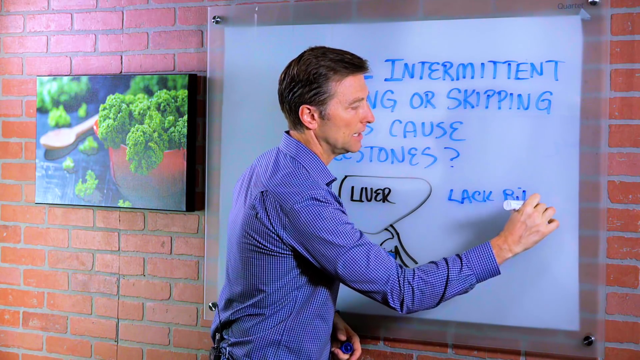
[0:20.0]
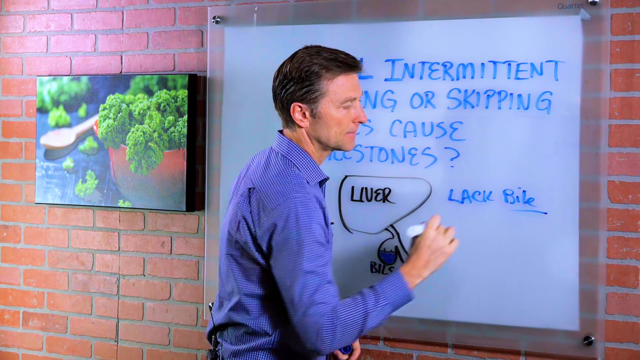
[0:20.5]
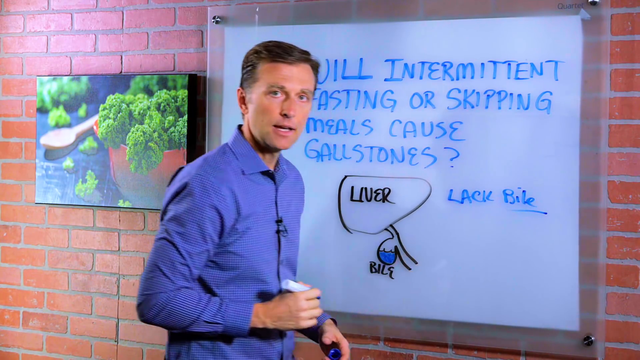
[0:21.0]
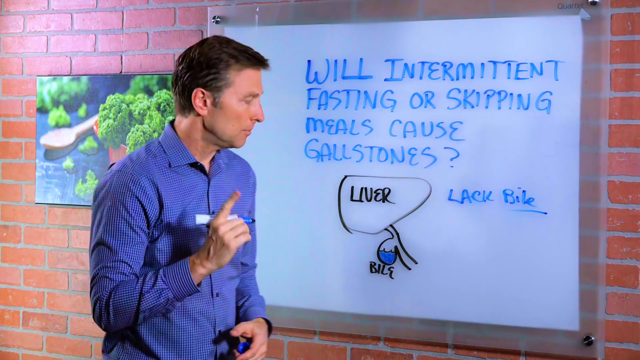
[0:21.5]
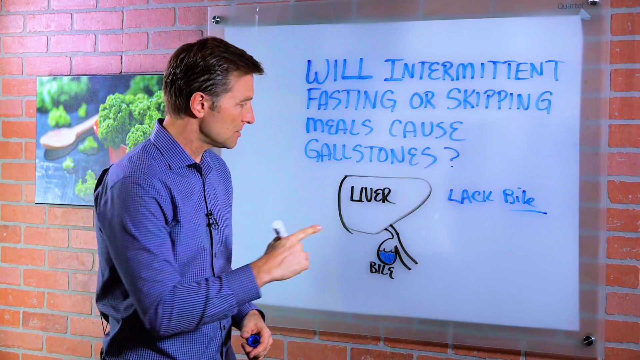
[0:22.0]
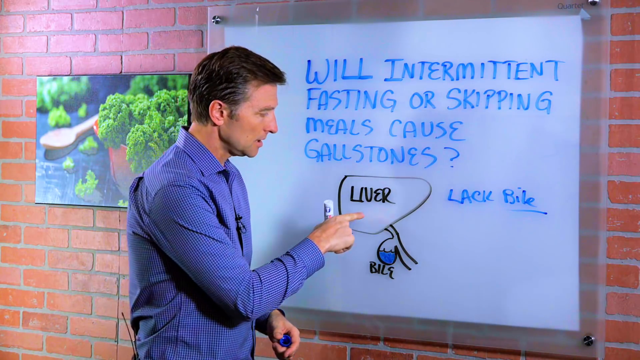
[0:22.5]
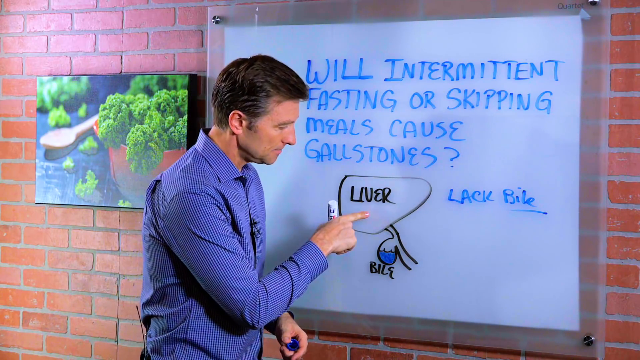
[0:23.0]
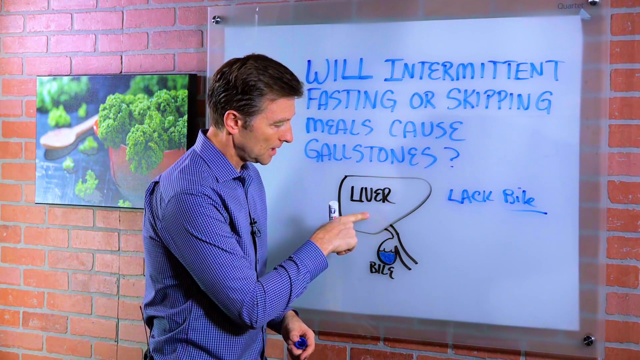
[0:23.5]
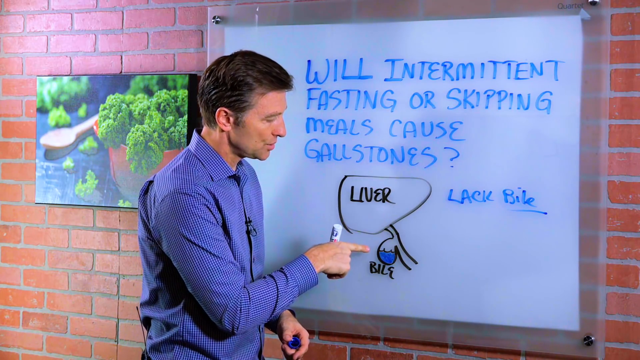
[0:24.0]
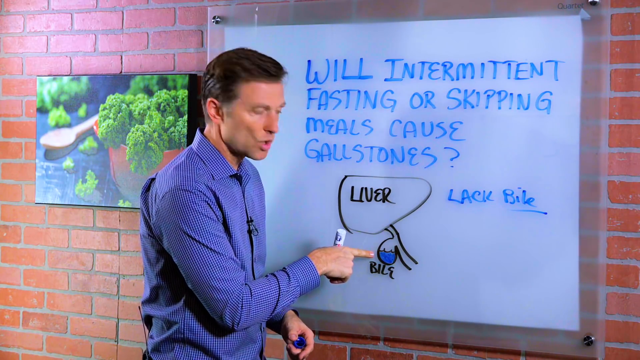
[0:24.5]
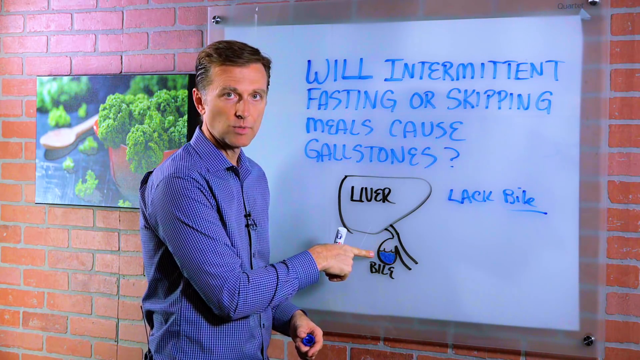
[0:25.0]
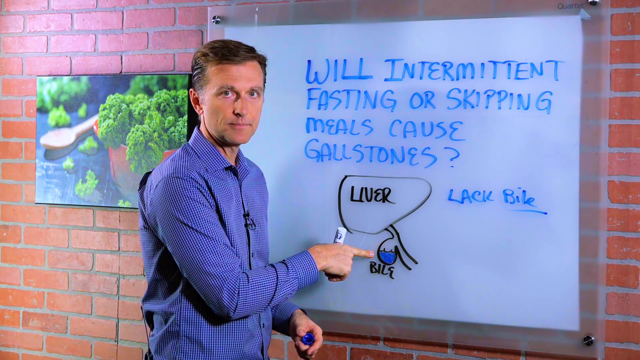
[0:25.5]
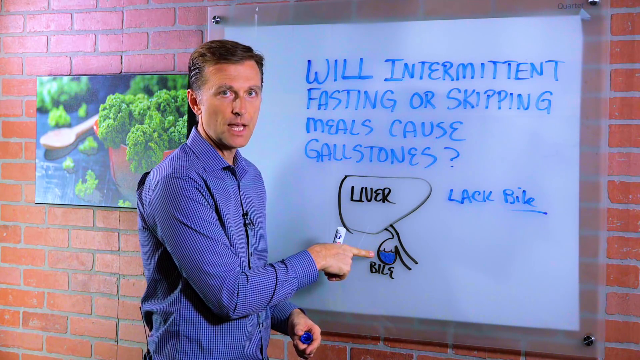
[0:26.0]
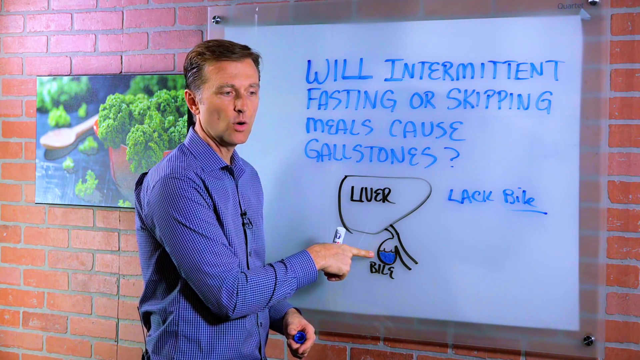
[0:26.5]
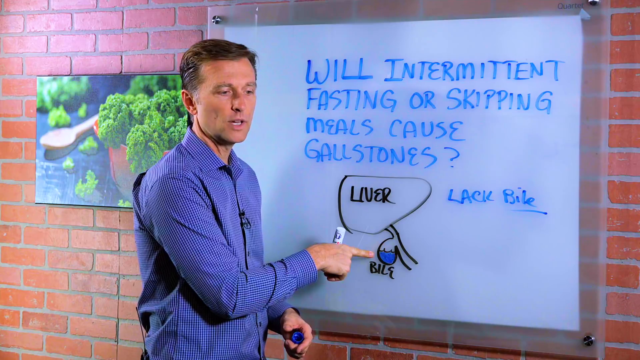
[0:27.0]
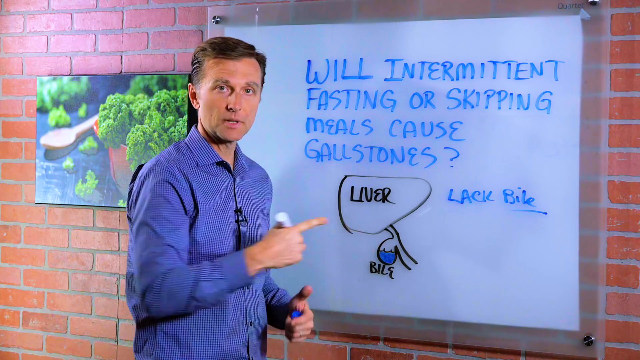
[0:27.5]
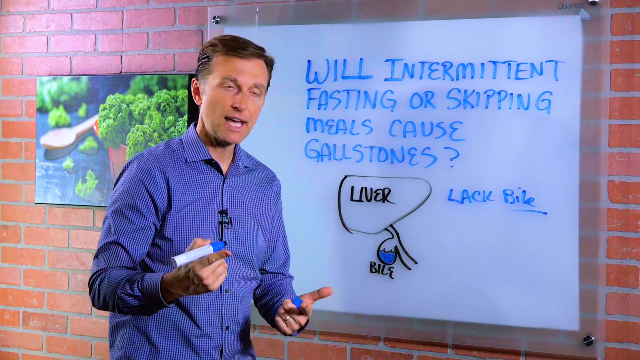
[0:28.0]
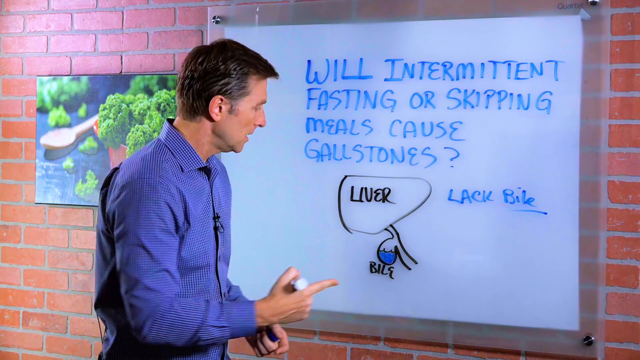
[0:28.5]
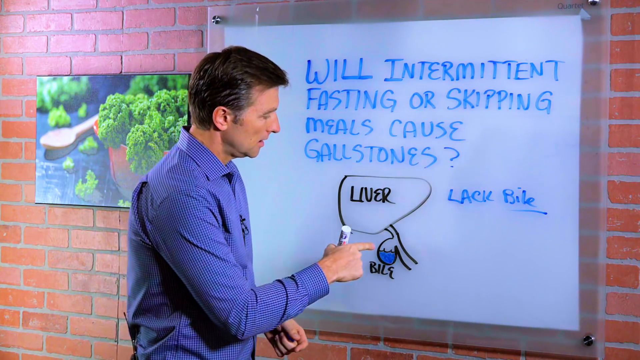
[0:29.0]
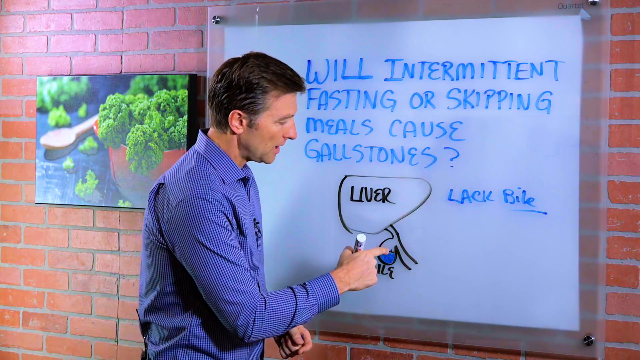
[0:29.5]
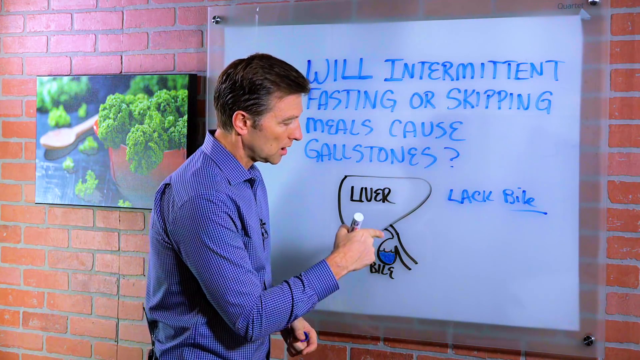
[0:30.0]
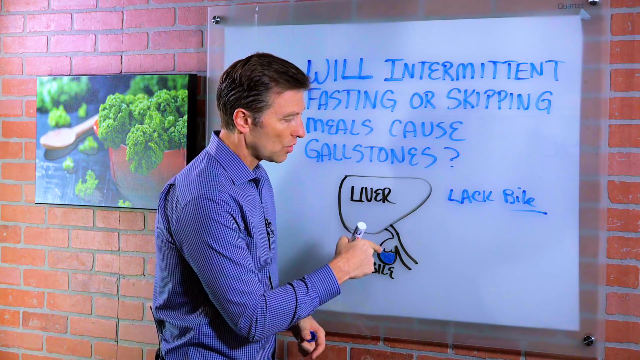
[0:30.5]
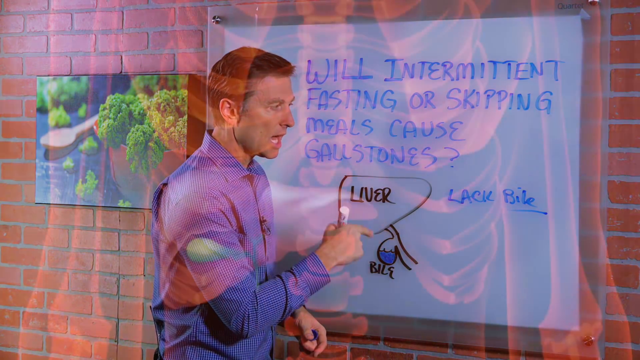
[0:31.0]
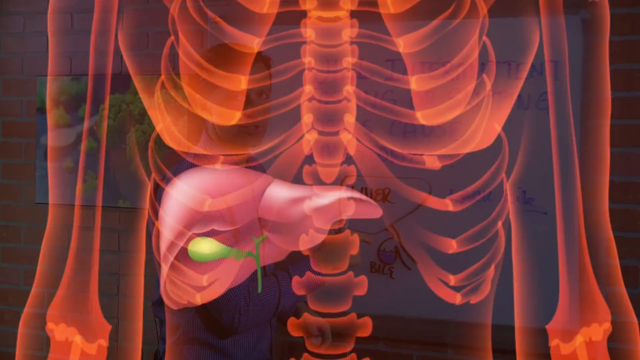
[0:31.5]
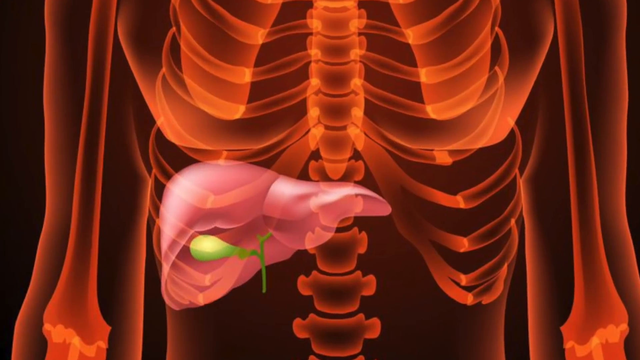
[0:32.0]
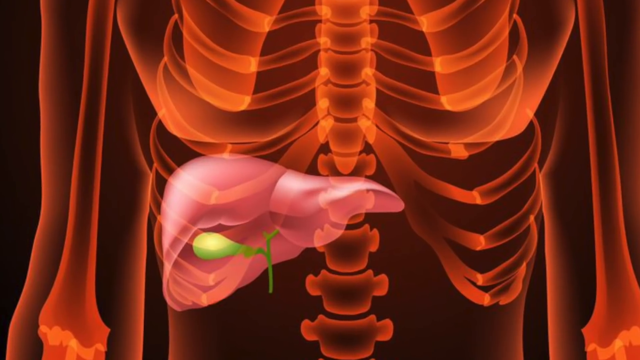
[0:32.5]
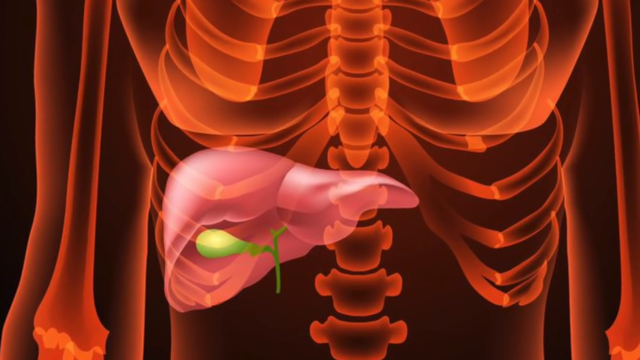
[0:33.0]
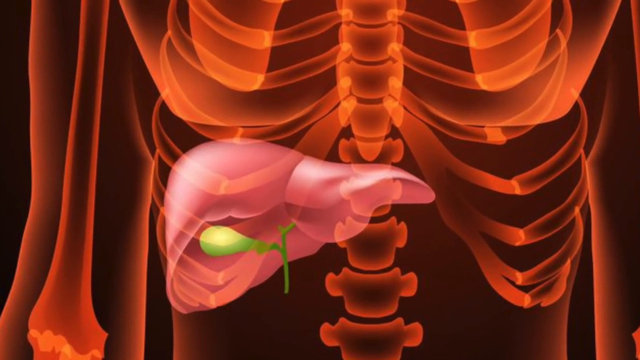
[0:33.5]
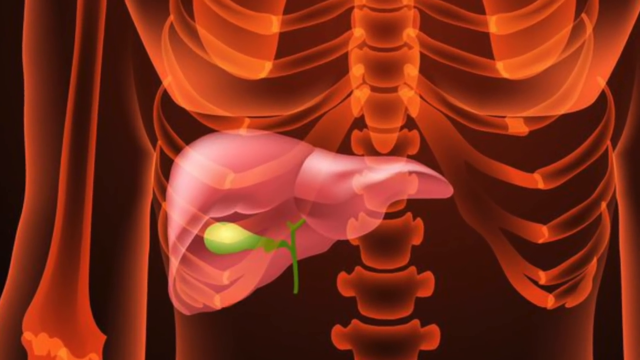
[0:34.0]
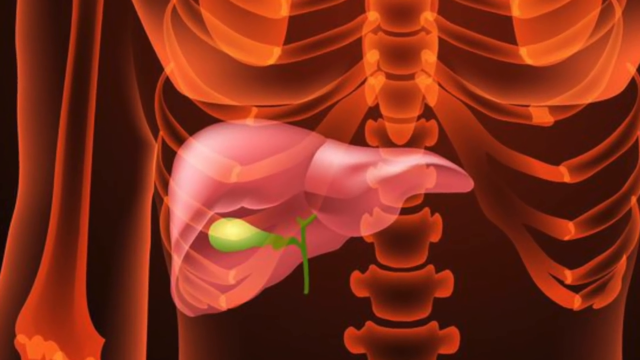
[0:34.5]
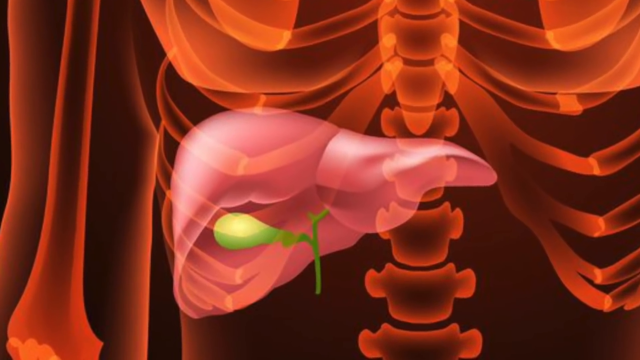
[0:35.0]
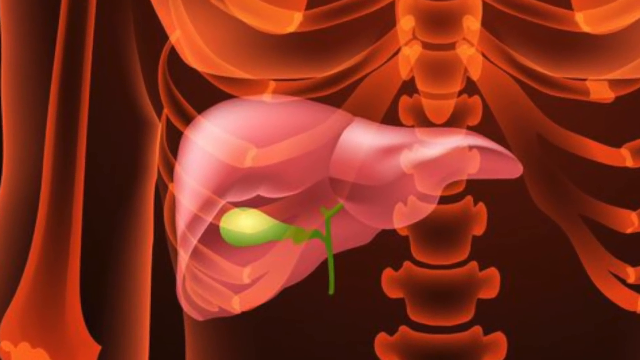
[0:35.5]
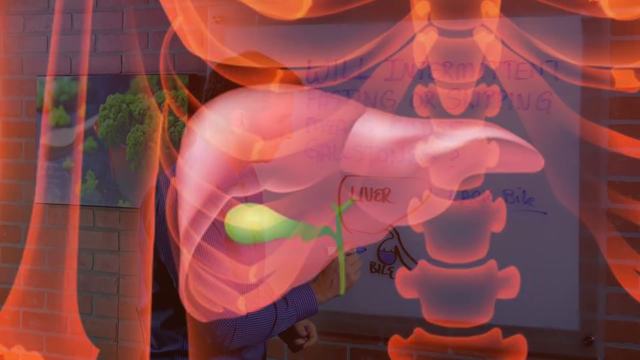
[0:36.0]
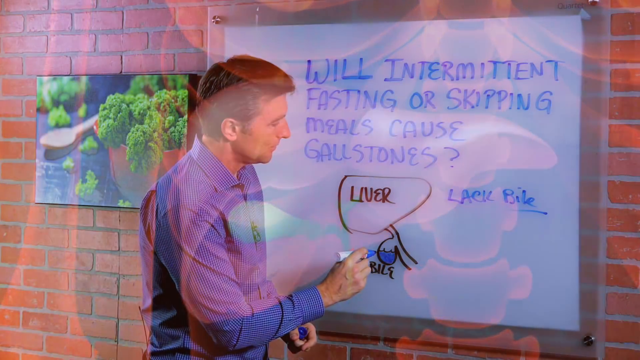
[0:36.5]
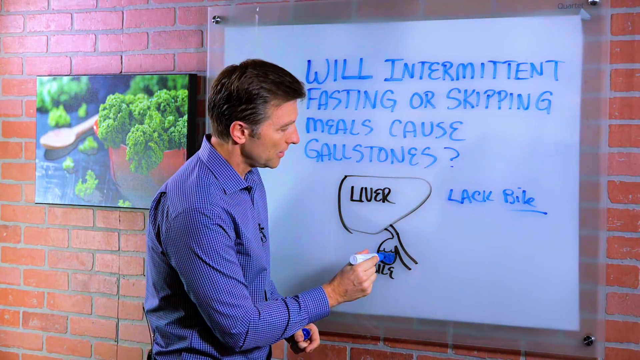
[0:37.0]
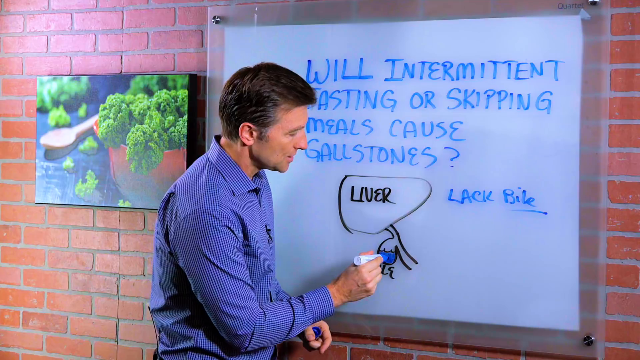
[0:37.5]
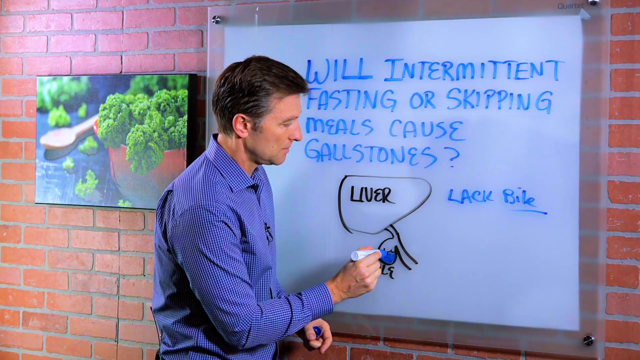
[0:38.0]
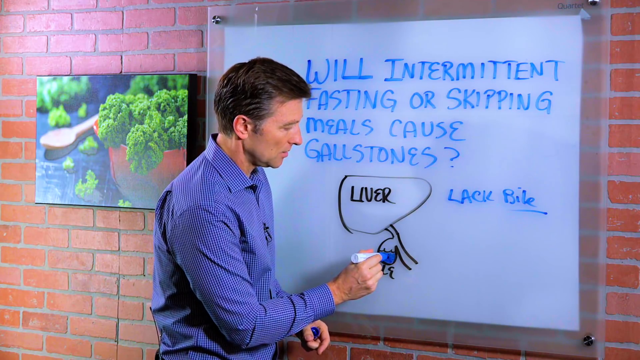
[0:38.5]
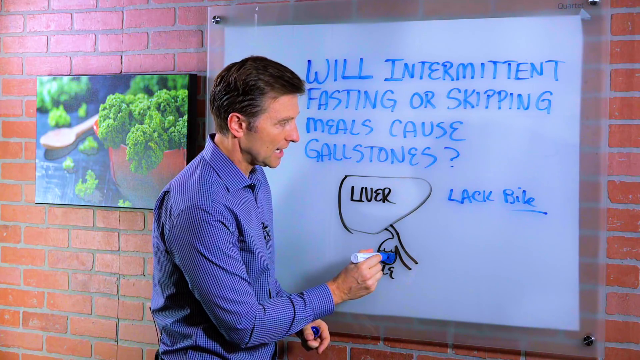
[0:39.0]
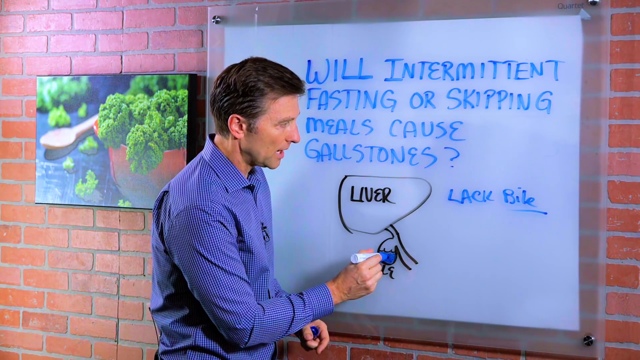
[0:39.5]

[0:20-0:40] The man points at the liver and then at the bile duct on the whiteboard, pointing at the bile duct repeatedly. An animation shows the bile duct inside the liver, coloured green. He underlines the word "bile" and continues pointing at the liver and the bile duct. Another animation shows the human body with the bones looking red, the liver in pink and the bile duct underneath it in green. He keeps pointing at the bile duct on the whiteboard with his marker. The background is still the red brick wall with the picture of broccoli in a terracotta bowl with a wooden spoon on a black background.